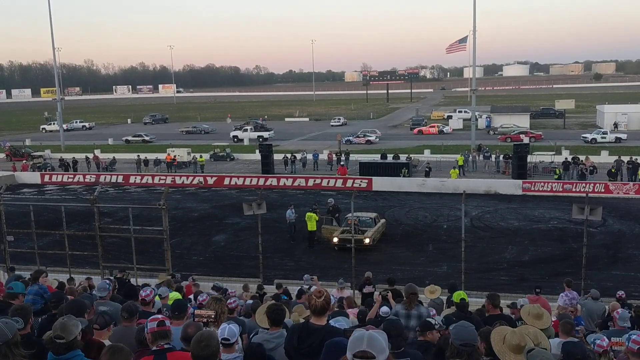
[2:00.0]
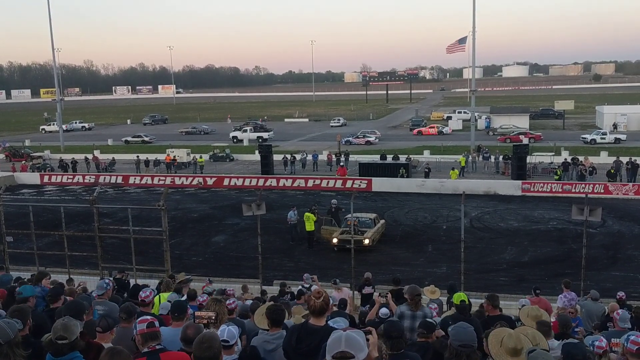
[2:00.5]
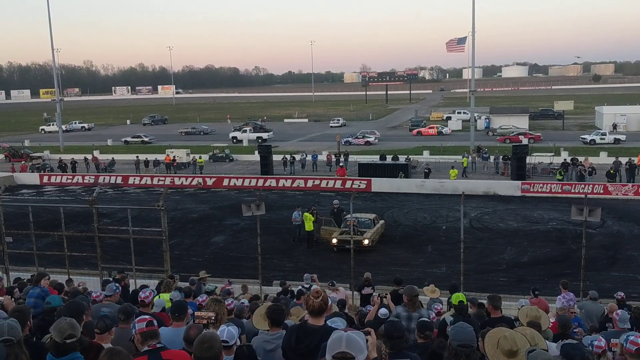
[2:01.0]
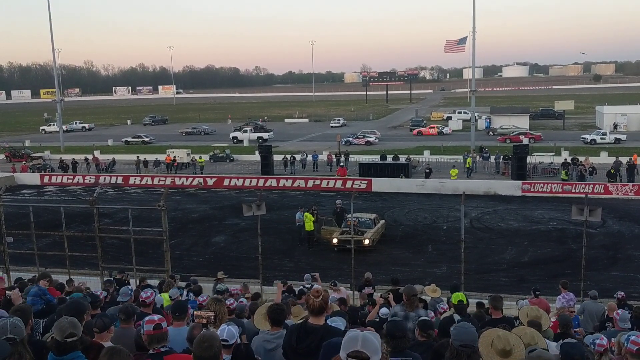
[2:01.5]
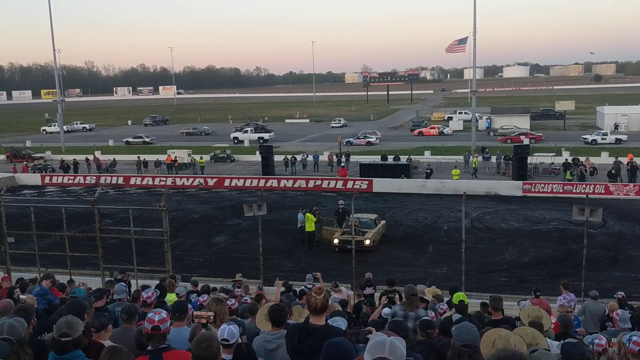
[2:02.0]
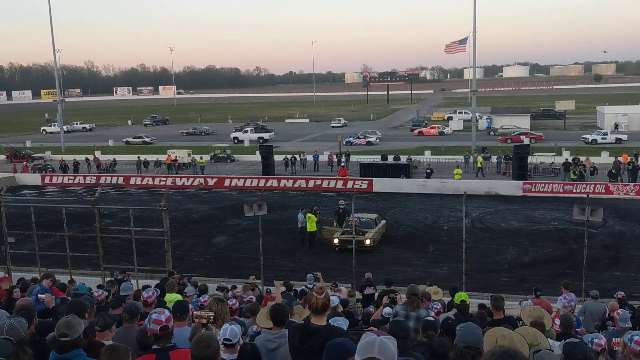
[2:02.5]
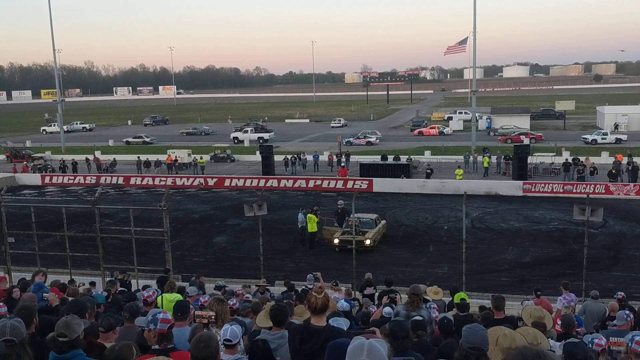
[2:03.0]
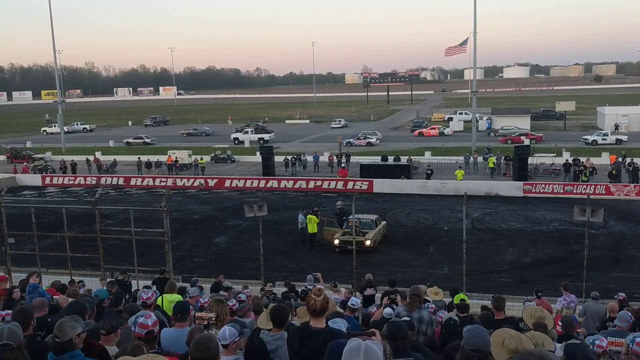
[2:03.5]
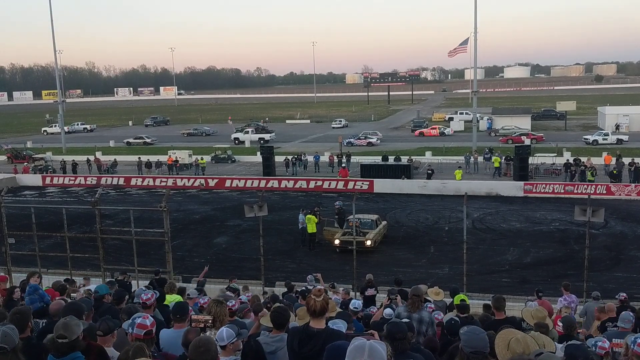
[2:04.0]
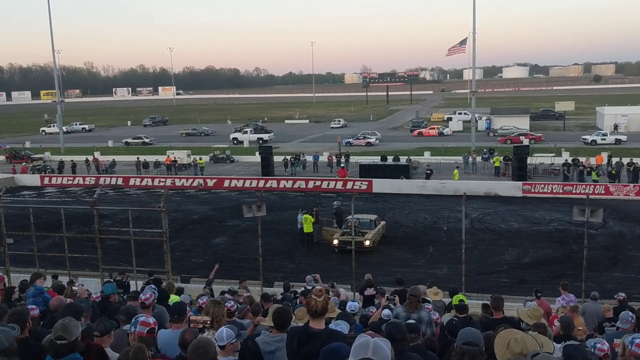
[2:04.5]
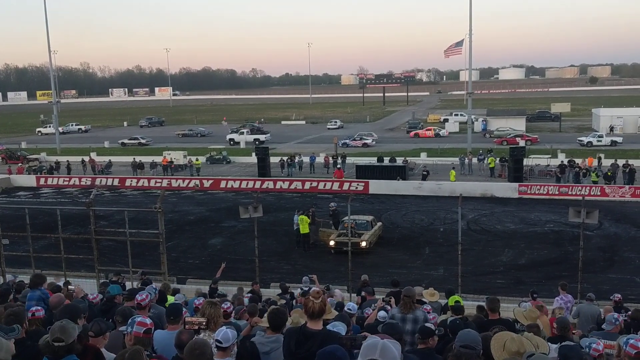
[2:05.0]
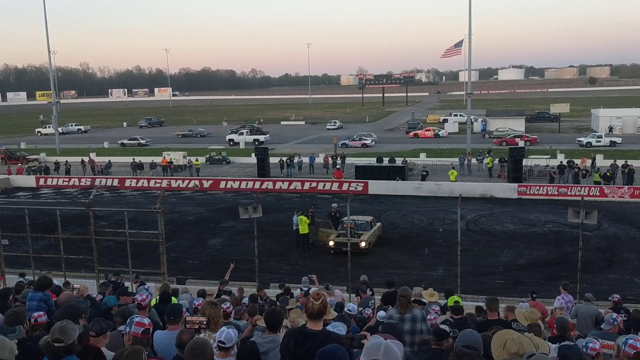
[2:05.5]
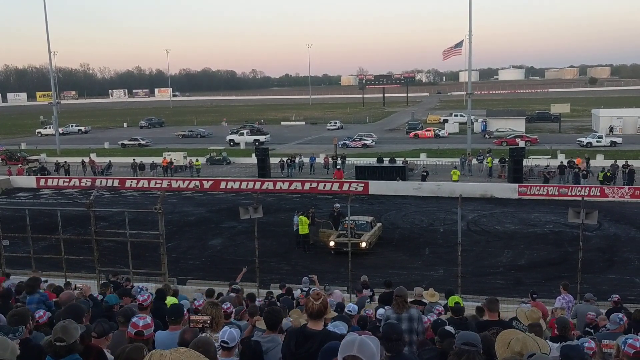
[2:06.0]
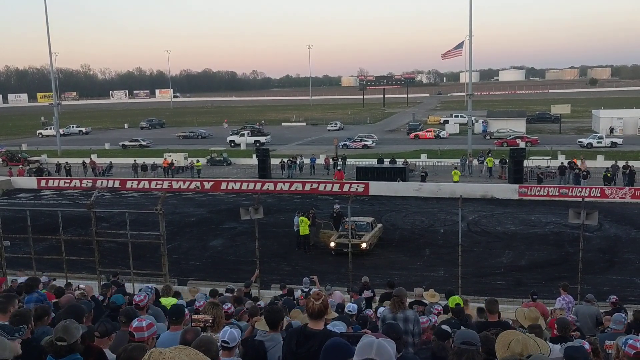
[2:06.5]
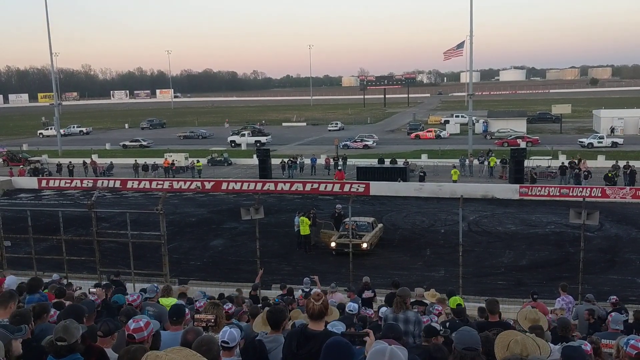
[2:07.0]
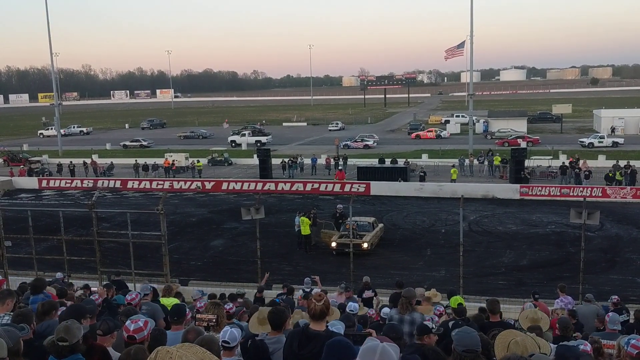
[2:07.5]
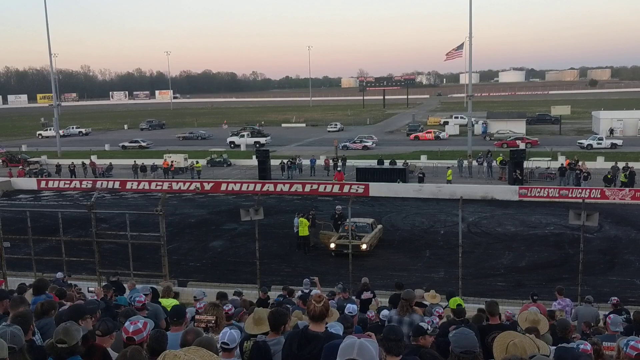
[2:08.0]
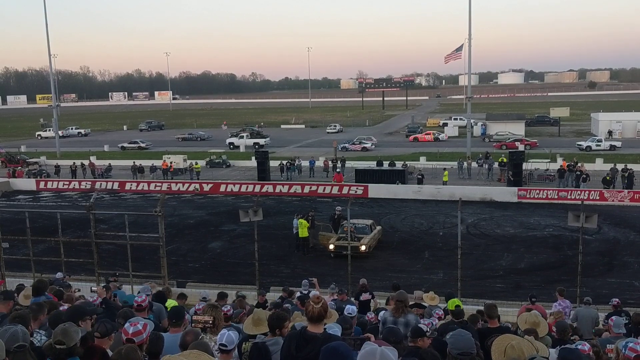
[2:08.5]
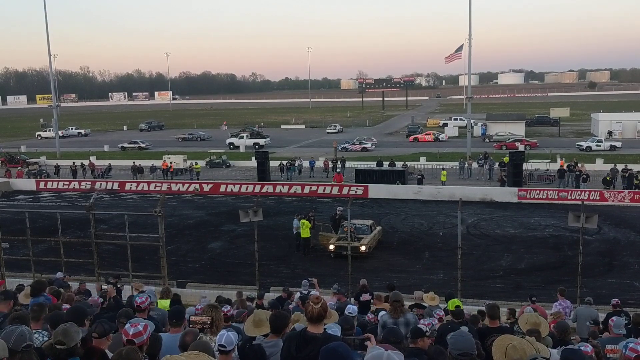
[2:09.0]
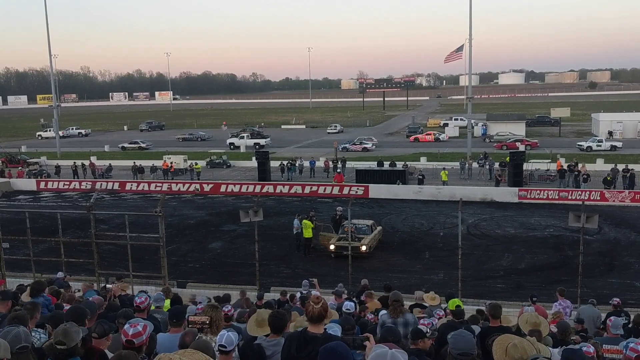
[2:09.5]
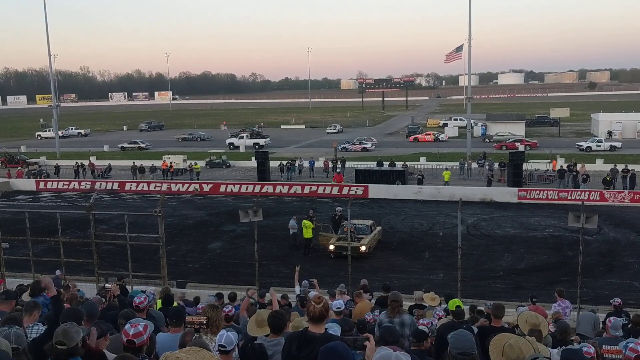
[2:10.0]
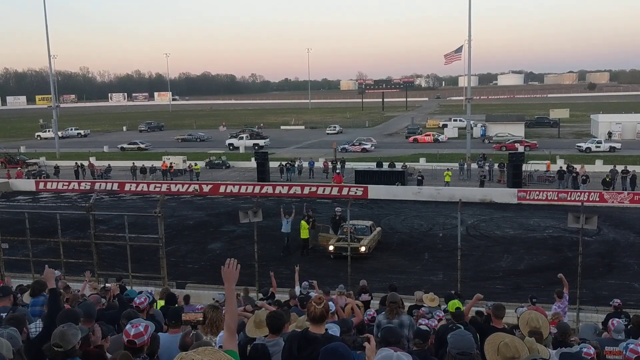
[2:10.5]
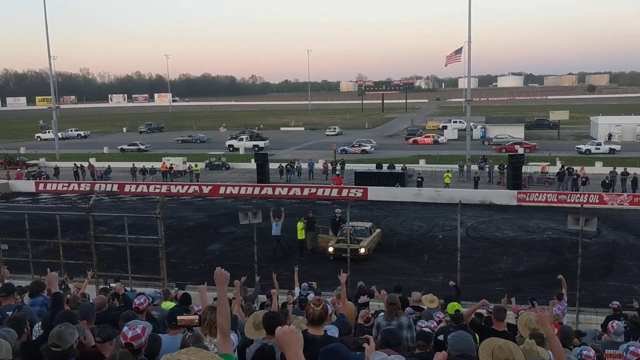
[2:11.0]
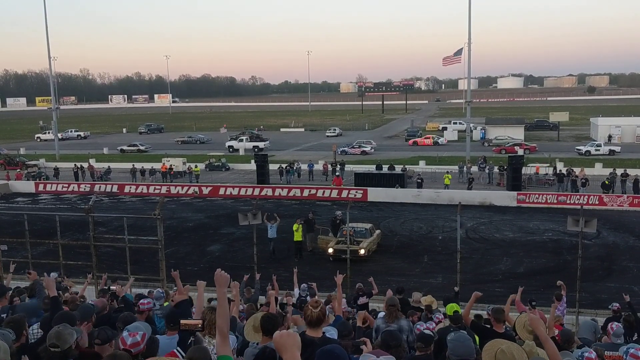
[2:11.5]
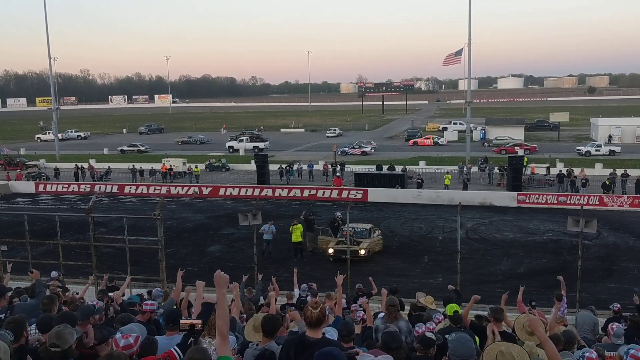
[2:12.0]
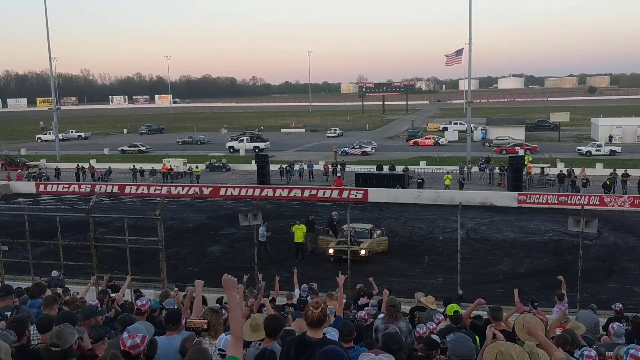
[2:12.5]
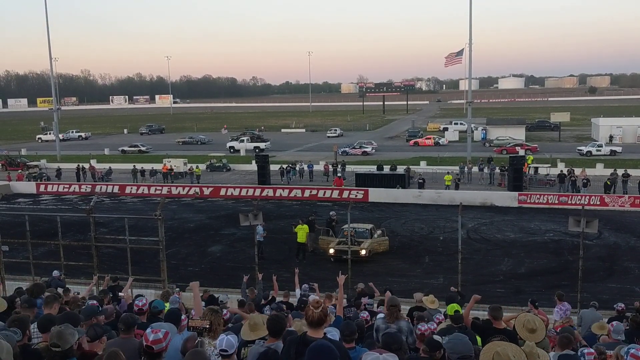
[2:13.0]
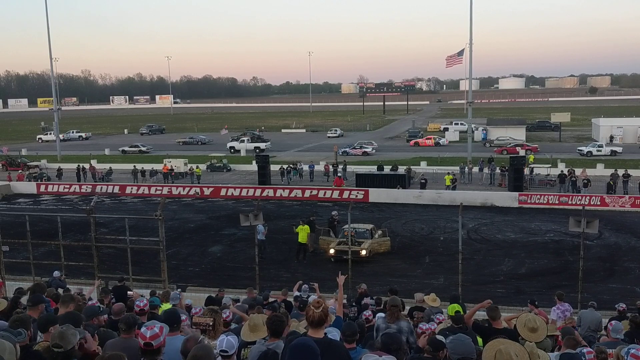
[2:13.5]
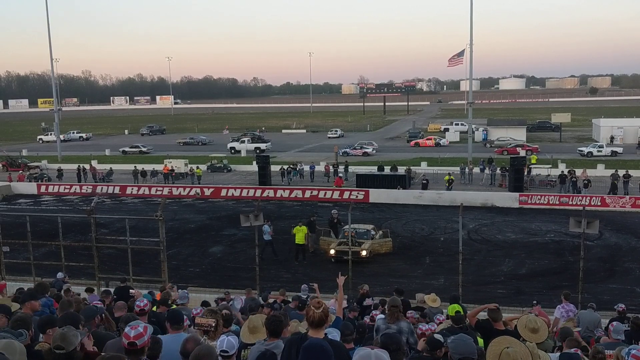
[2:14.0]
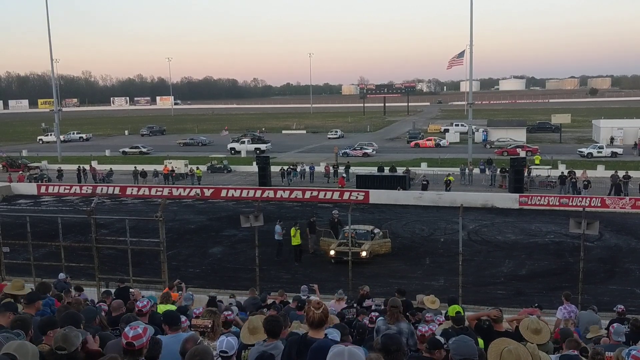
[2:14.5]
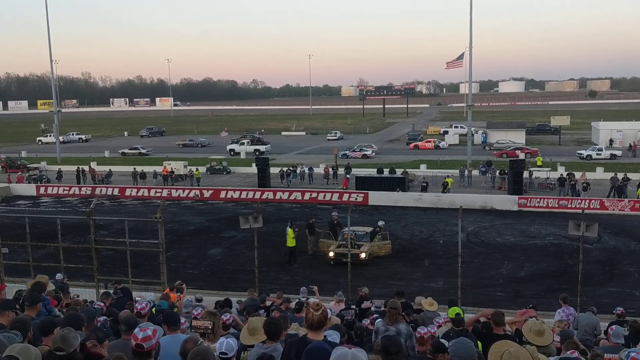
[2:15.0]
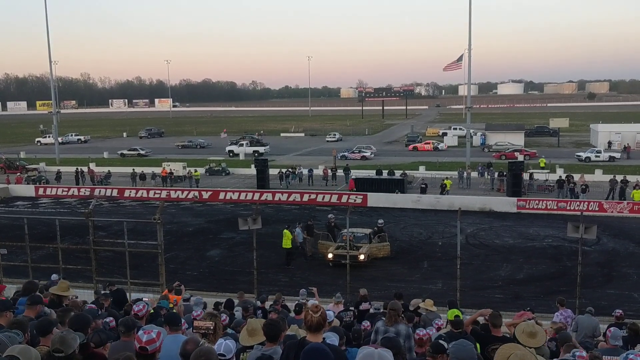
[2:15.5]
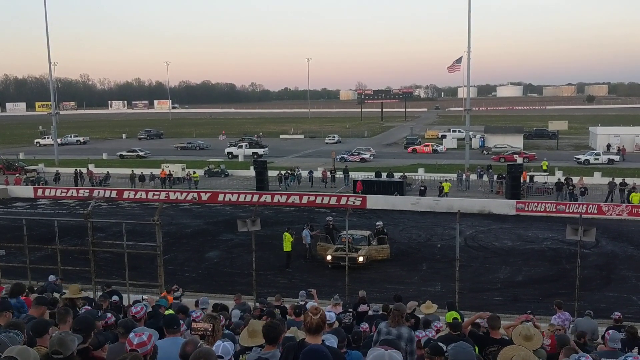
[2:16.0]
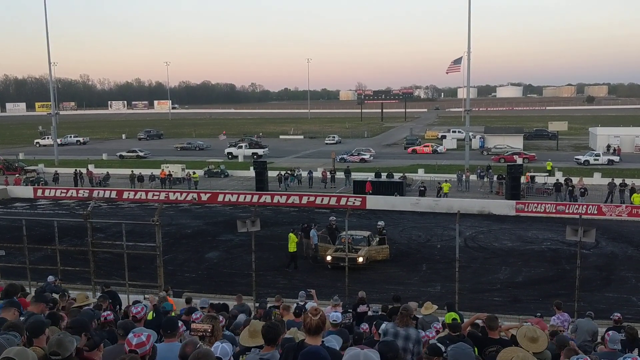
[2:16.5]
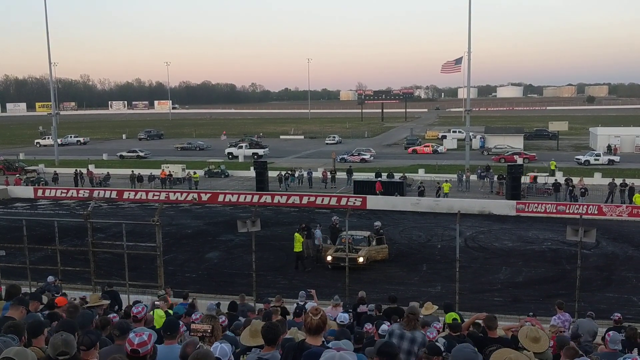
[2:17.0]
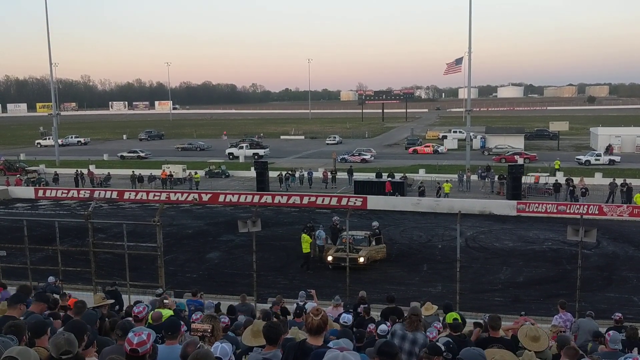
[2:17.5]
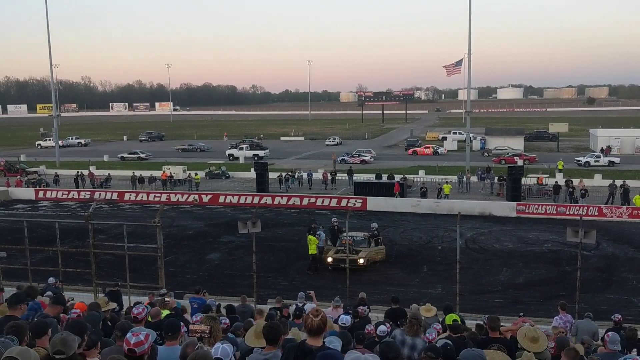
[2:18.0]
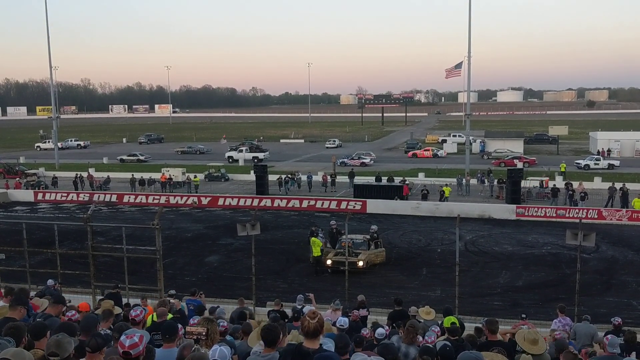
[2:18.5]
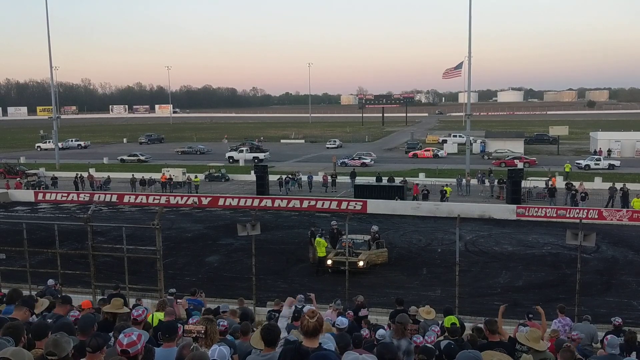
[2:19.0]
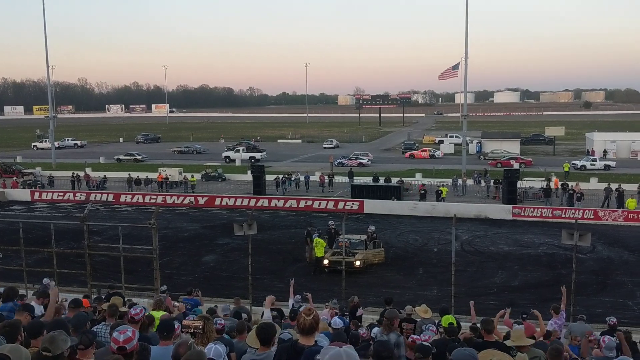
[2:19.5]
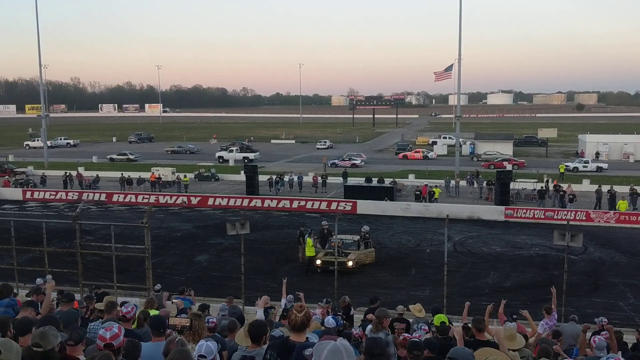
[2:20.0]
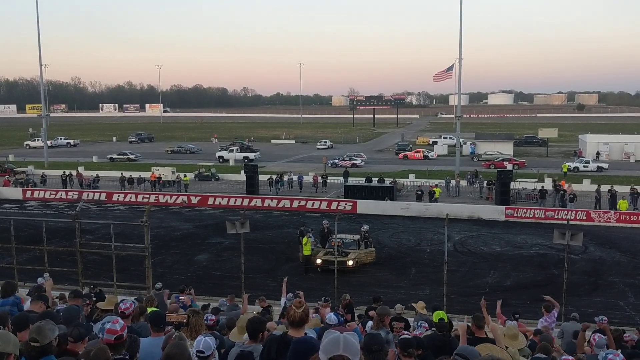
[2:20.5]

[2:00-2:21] The racetrack for cars continues to be shown, with a section around it for fans, perhaps hundreds or even thousands of them. The location seems to be the United States of America, as a USA flag is posted on one of the pillars. The skies are clear and somewhat red, suggesting it is perhaps evening. On the circuit is the yellow car with its front light switched on; the car seems very old. The driver is outside the car, wearing a white helmet and dark clothing. Many fans point towards the driver in appreciation and raise their hands to acknowledge him. A few other individuals are on the circuit; they too seem to be celebrating and addressing the crowd. Another man comes out of the car, this time on the driver's side, also wearing a white helmet and dark clothing.